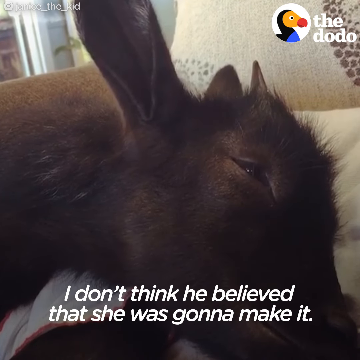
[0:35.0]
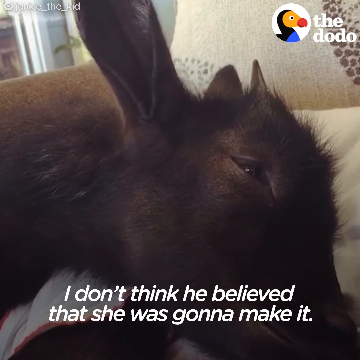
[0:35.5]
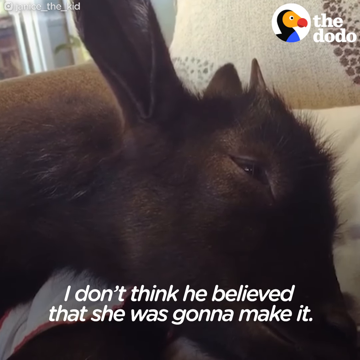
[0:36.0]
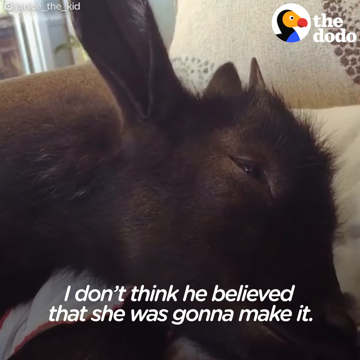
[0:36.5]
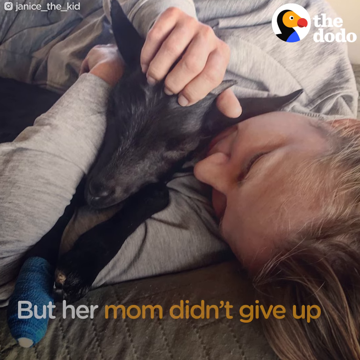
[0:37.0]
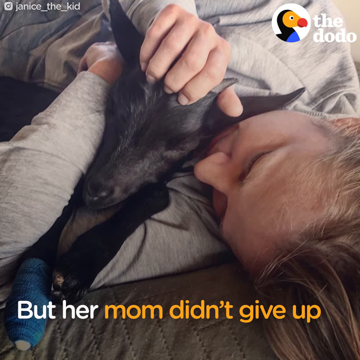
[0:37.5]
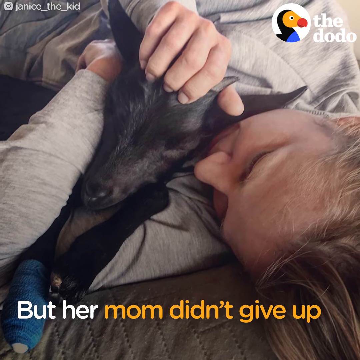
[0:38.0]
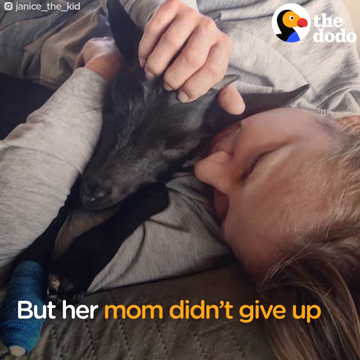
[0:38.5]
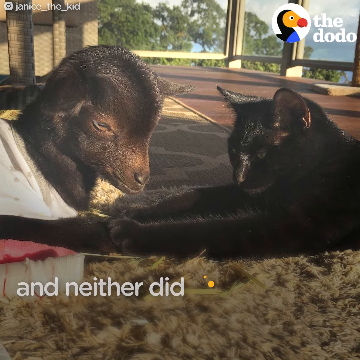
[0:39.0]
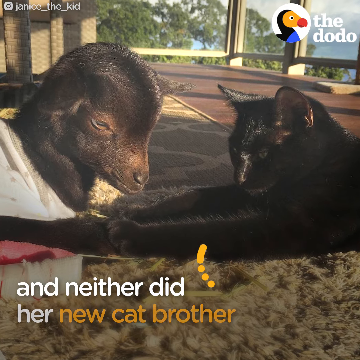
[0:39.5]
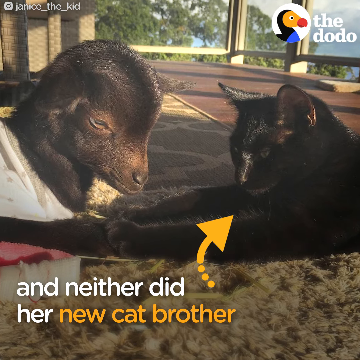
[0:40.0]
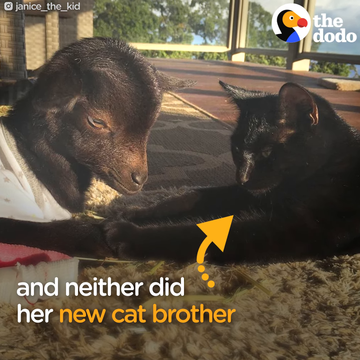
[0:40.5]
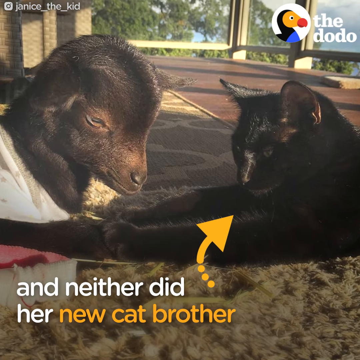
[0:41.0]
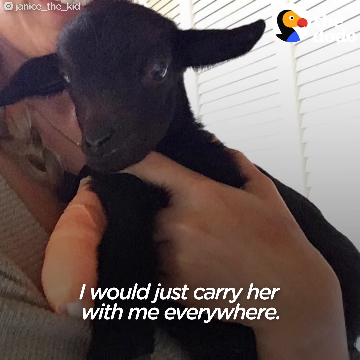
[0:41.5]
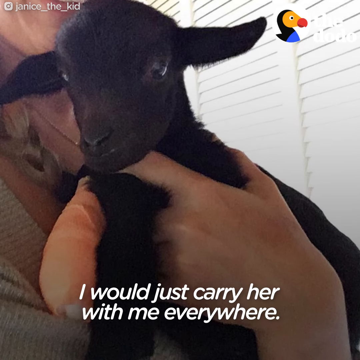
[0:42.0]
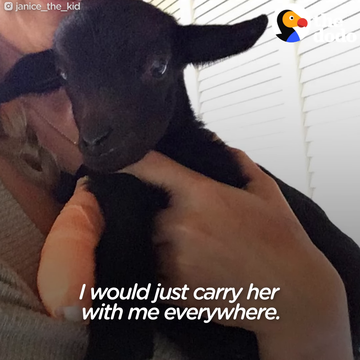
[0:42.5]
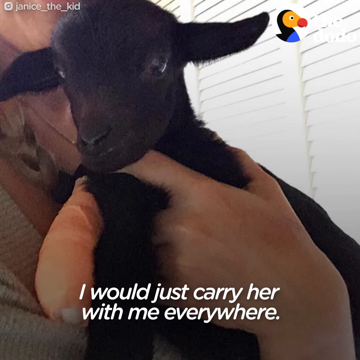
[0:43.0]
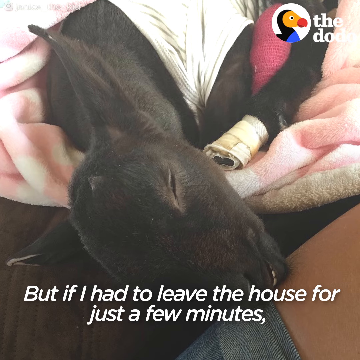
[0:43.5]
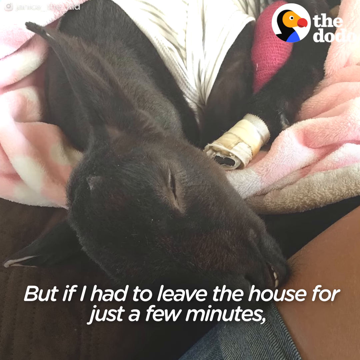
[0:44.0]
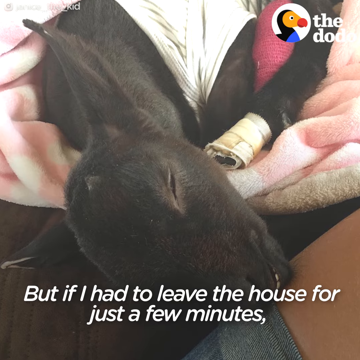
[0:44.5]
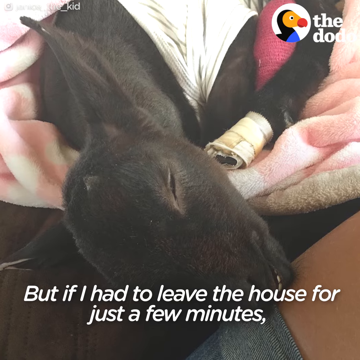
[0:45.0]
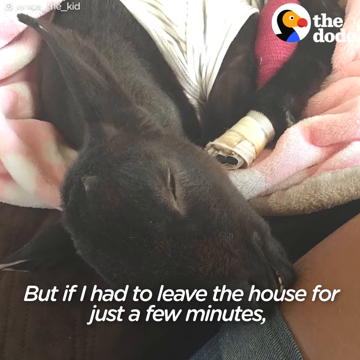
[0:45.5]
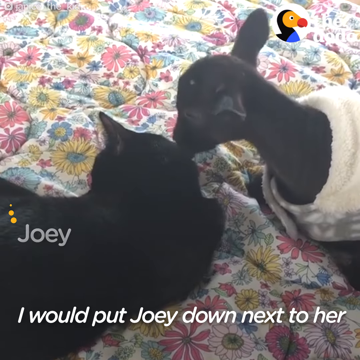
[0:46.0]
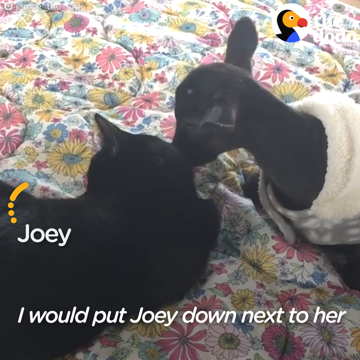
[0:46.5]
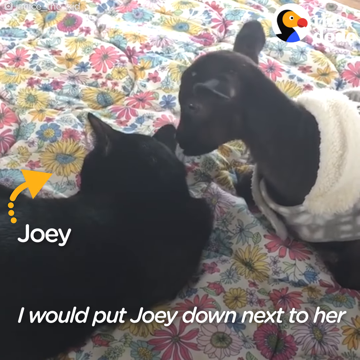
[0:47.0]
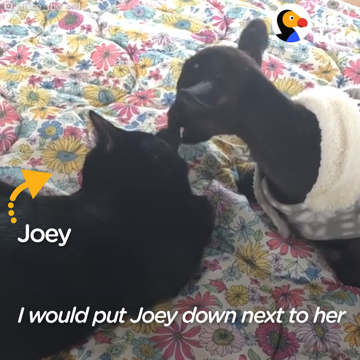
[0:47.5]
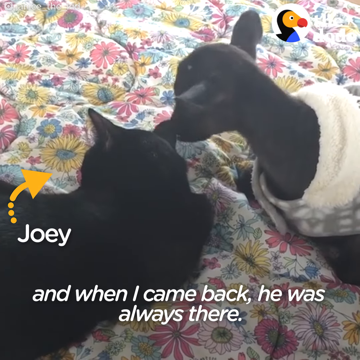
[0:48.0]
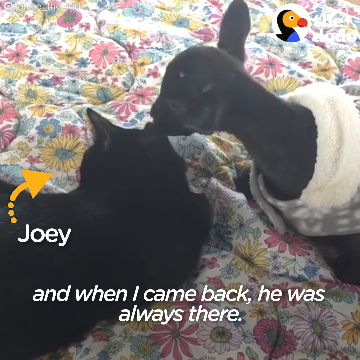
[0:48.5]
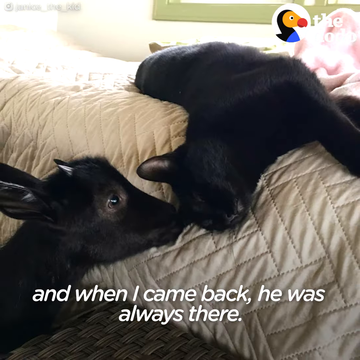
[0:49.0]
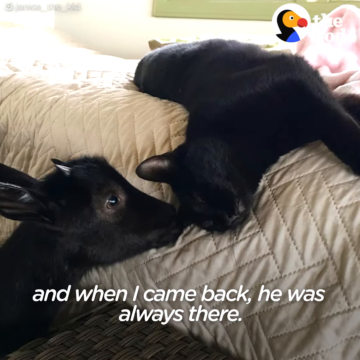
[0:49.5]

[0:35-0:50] The goat has a love fest with the cat. He lies on the bed, eats happily out of the lady's hand, and then naps. He and the lady lie on the bed. Then he and the cat sit with their legs outstretched, and he licks the cat, cleaning its fur. There are more animals: a ginger kitty and another little dog. The lady holds another goat that has really long horns. The little goat jumps all over everything and now has four band-aids, one on each leg on his paws. He runs after the ginger cat in the yard and jumps on the brown couch in the house. He wears little net-like onesies like those put on a baby.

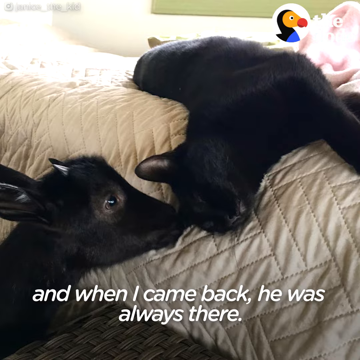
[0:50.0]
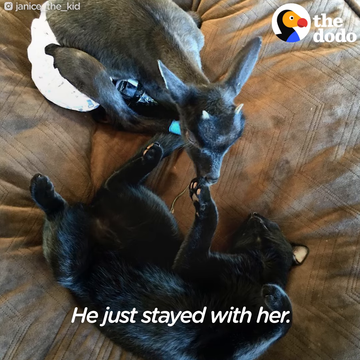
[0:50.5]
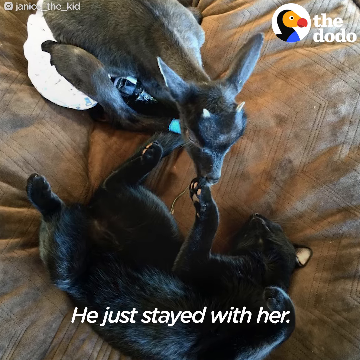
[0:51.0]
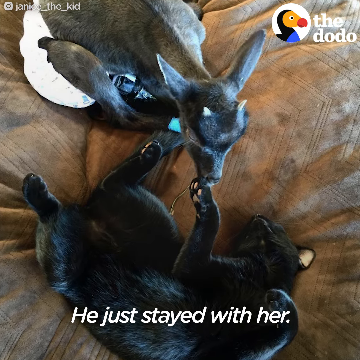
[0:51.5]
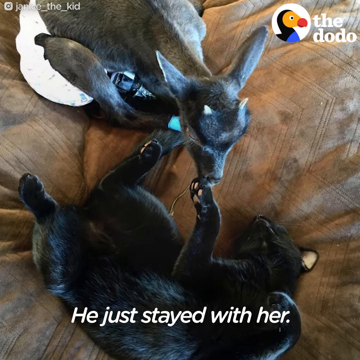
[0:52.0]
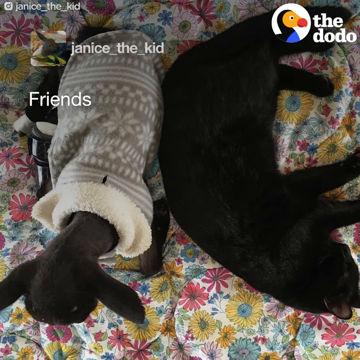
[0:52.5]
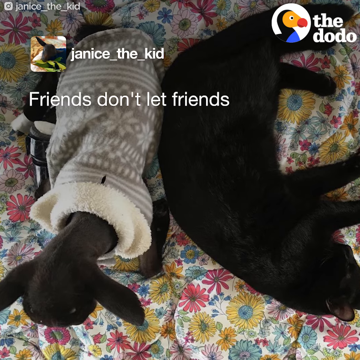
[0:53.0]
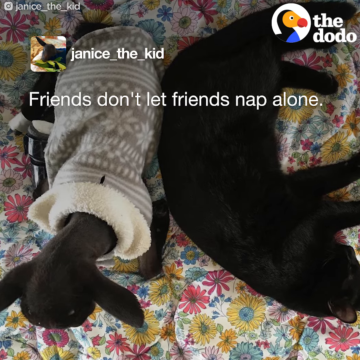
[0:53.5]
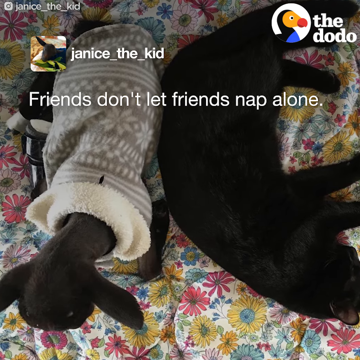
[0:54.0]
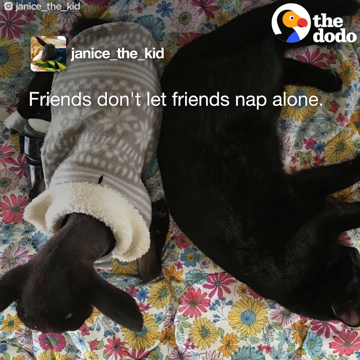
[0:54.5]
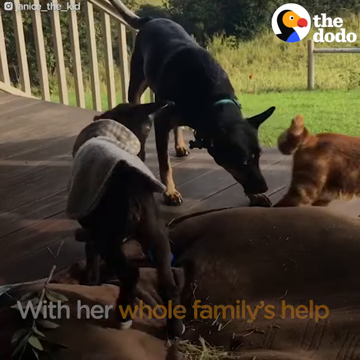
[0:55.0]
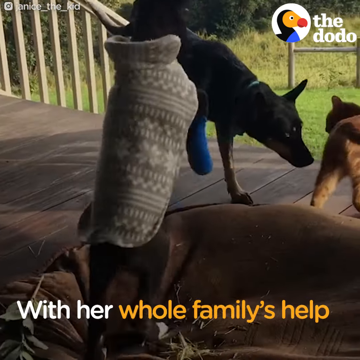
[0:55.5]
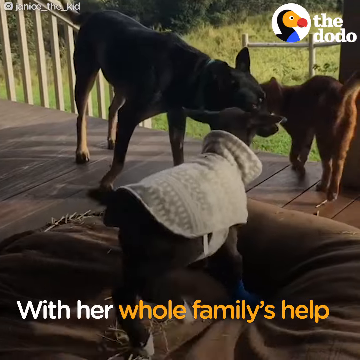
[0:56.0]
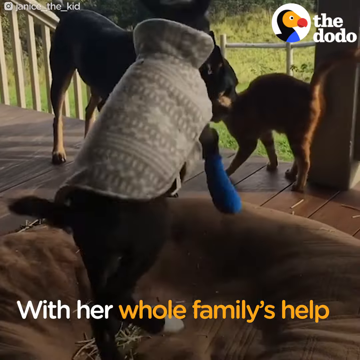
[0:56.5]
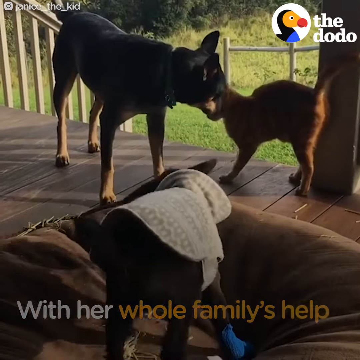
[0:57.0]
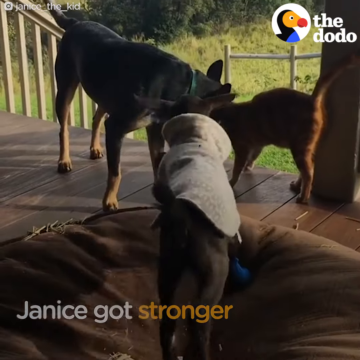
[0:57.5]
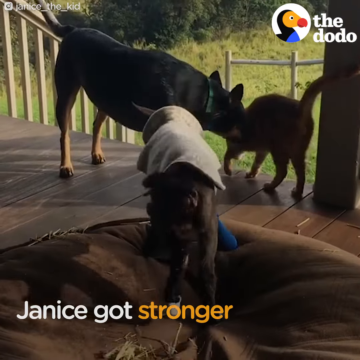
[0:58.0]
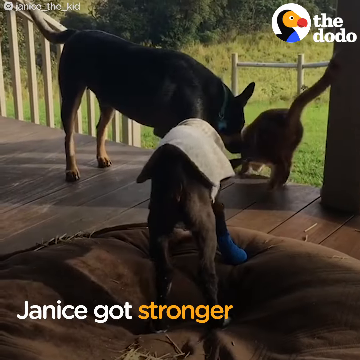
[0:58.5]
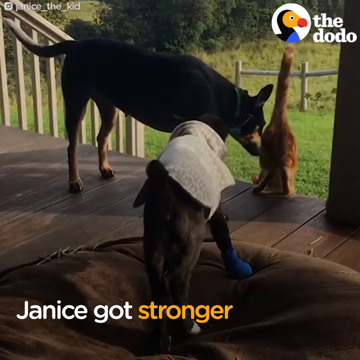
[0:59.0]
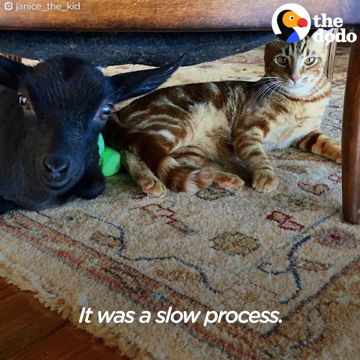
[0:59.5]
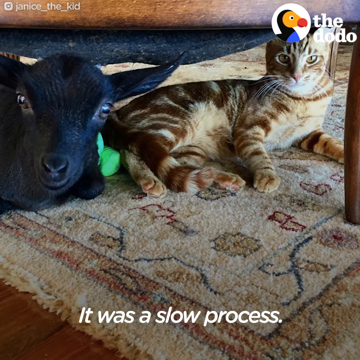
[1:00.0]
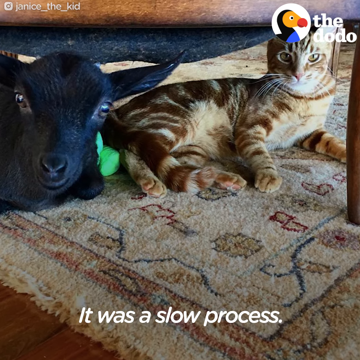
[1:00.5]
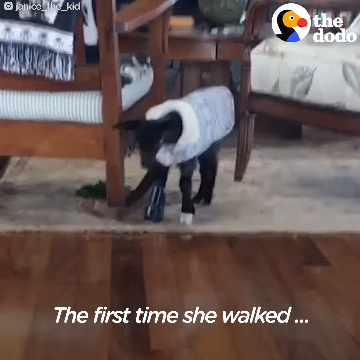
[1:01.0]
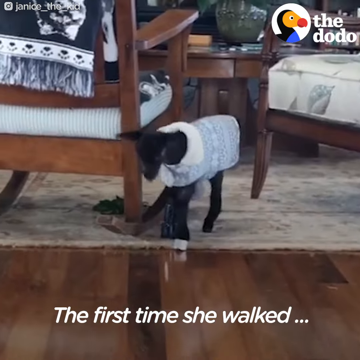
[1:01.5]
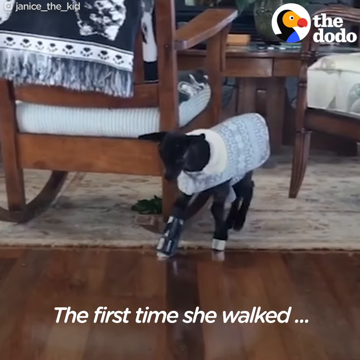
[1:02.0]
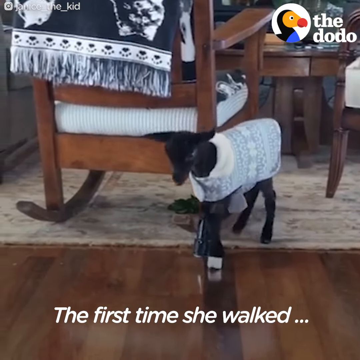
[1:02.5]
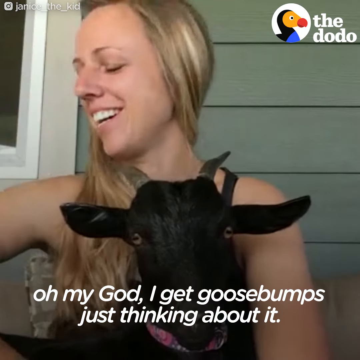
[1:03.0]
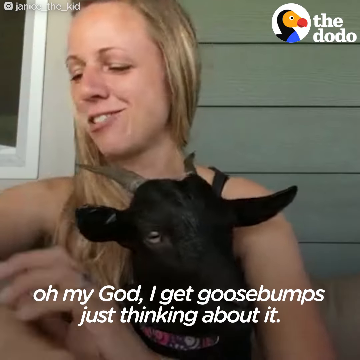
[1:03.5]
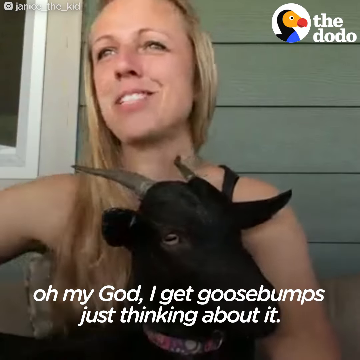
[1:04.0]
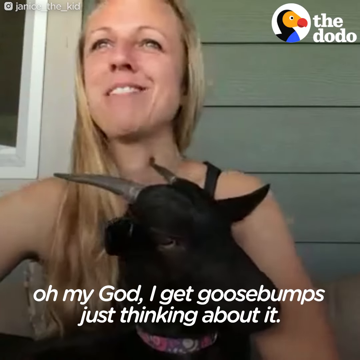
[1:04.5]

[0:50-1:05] The cat and the dog lie together. The goat wears a little brown, Christmas-looking sweater. The mother talks to someone while holding another goat that has long horns. Printed text says the little goat is getting better and that the whole animal family is helping him get better. Text also says "friends don't let friends nap." The little goat jumps all over everything as usual and walks around, now with a black cast-like brace on one paw and a blue cast on his other paw. He is shown sitting with a tortoiseshell cat, another of his cat friends, and lying with the black cat on the bed.